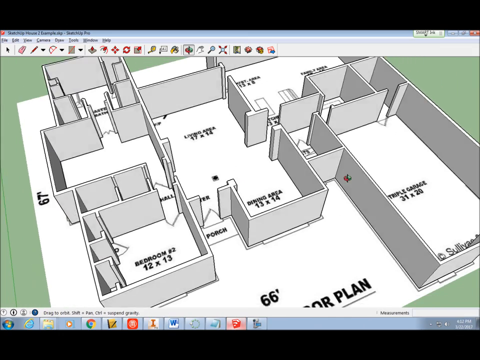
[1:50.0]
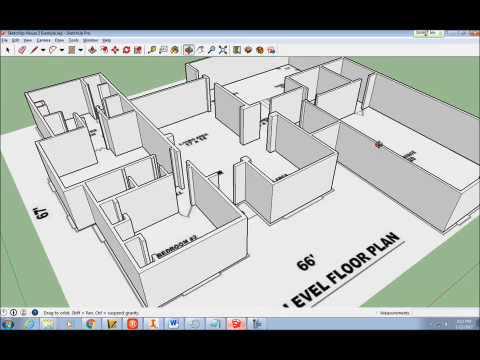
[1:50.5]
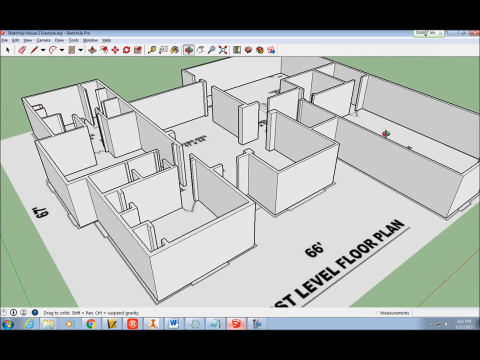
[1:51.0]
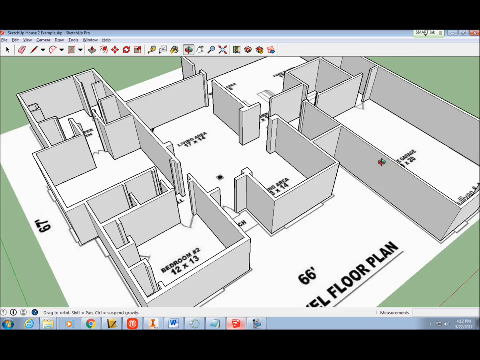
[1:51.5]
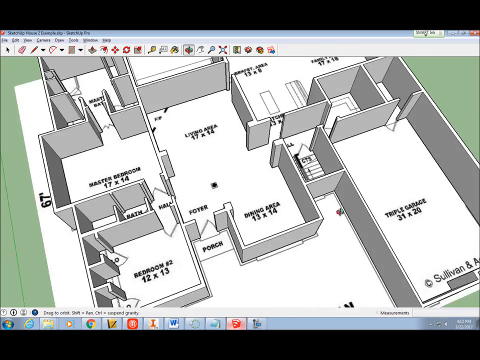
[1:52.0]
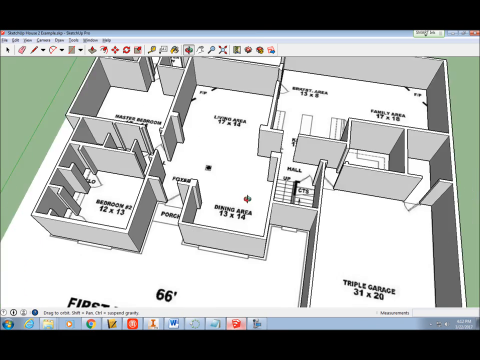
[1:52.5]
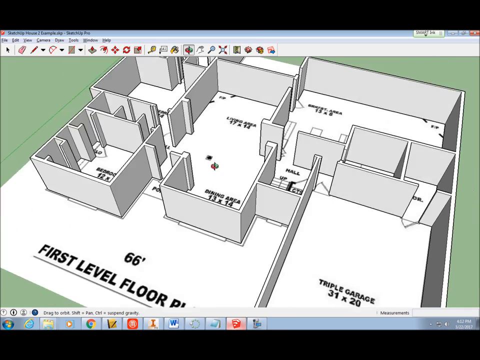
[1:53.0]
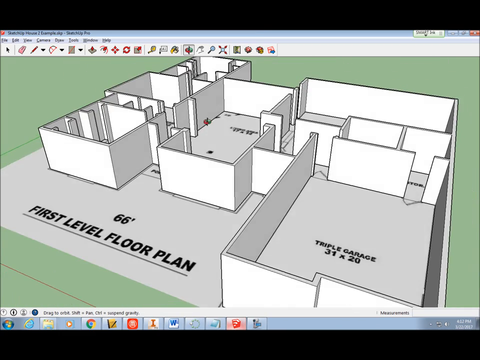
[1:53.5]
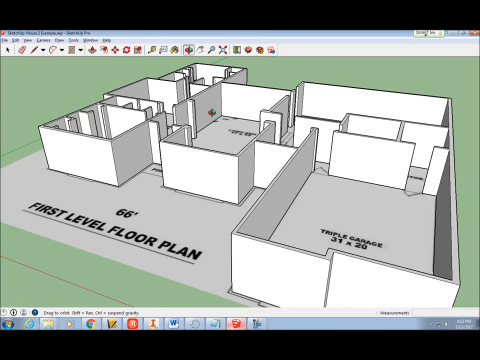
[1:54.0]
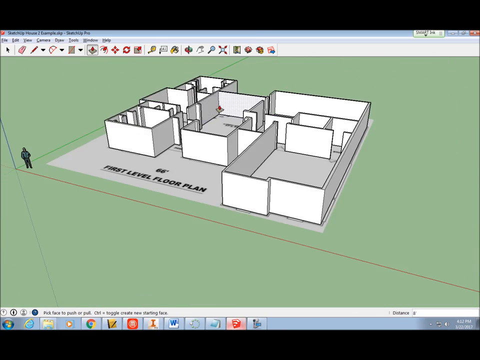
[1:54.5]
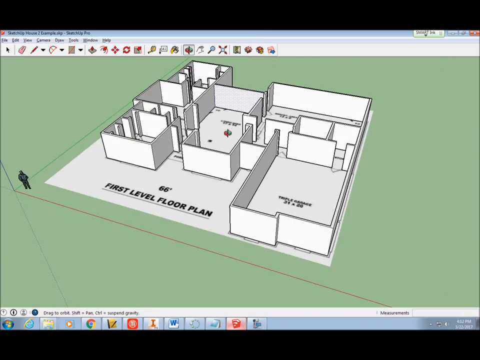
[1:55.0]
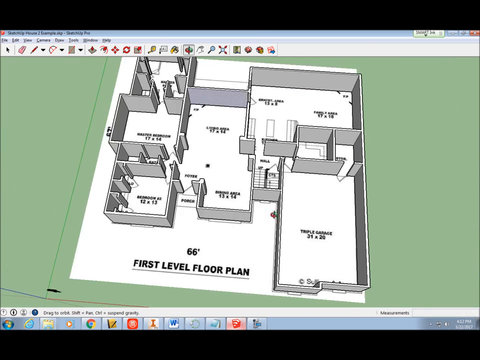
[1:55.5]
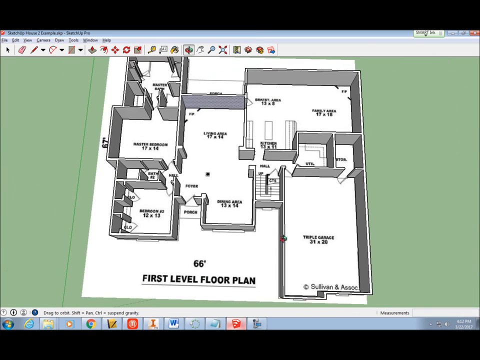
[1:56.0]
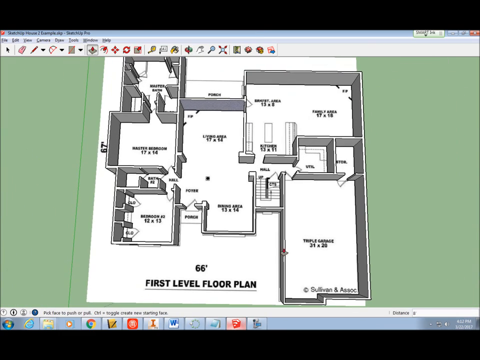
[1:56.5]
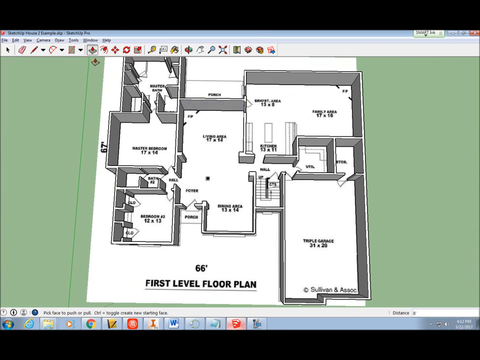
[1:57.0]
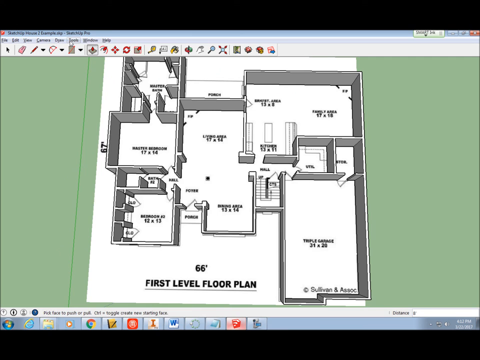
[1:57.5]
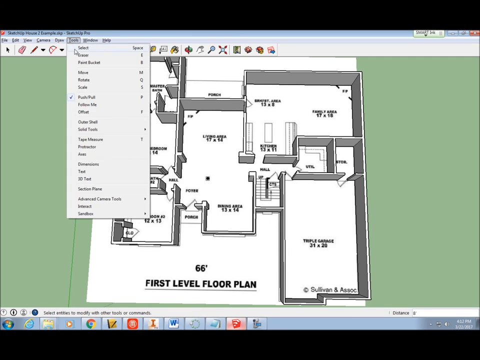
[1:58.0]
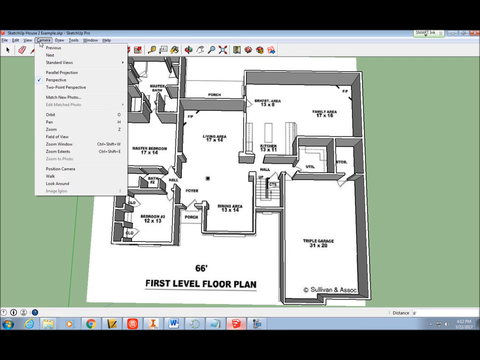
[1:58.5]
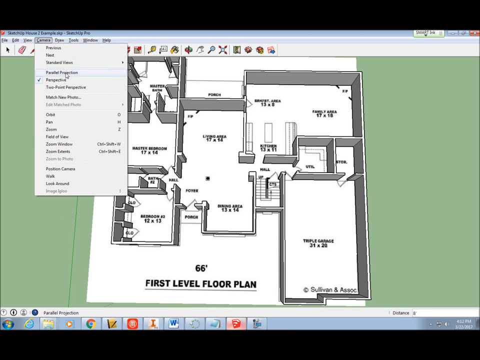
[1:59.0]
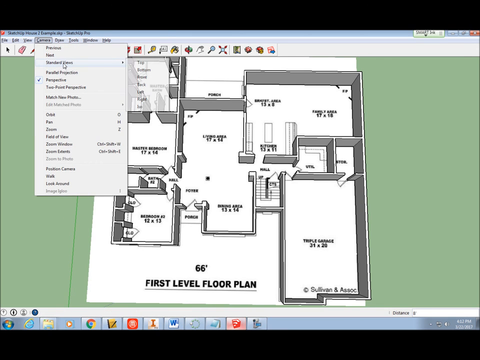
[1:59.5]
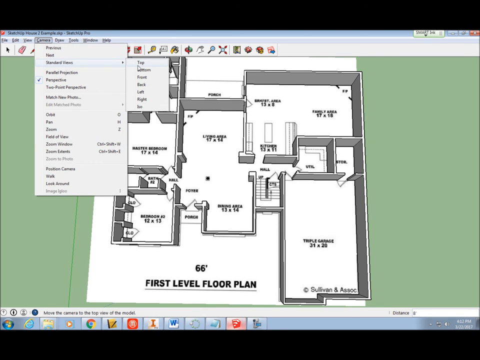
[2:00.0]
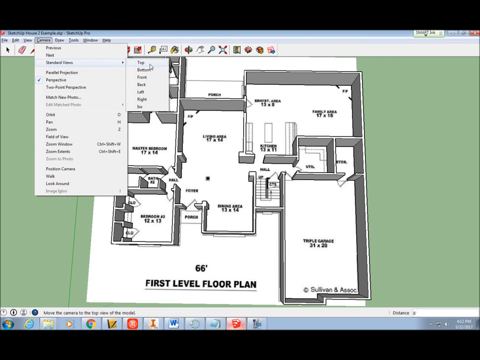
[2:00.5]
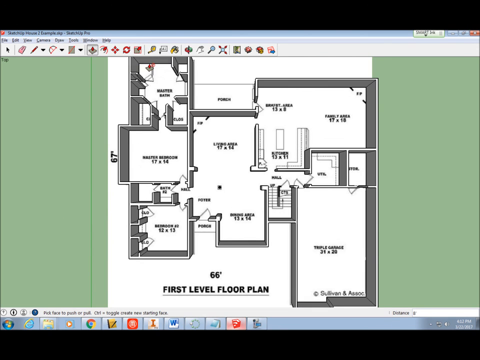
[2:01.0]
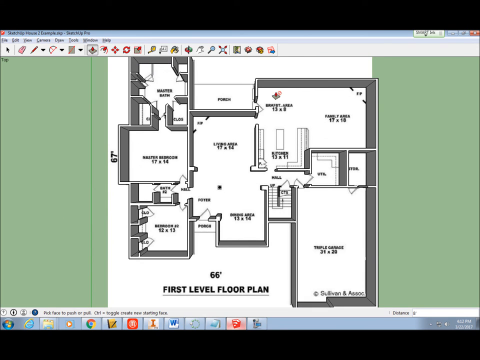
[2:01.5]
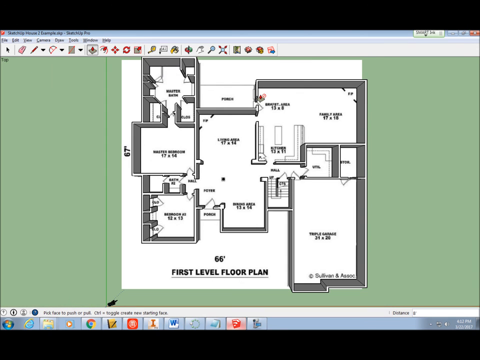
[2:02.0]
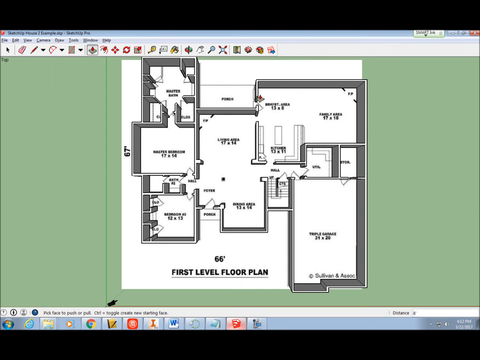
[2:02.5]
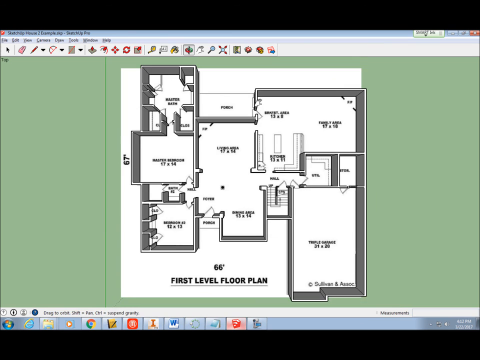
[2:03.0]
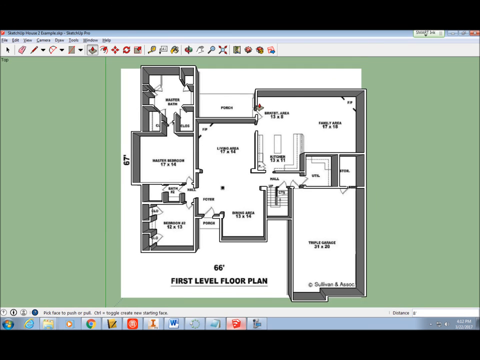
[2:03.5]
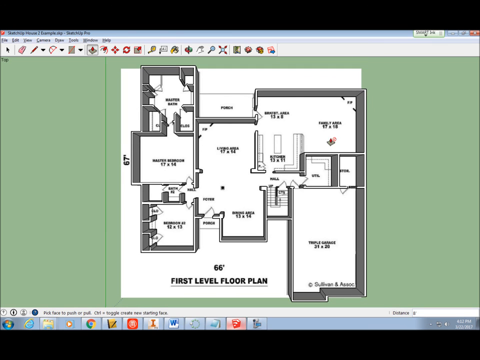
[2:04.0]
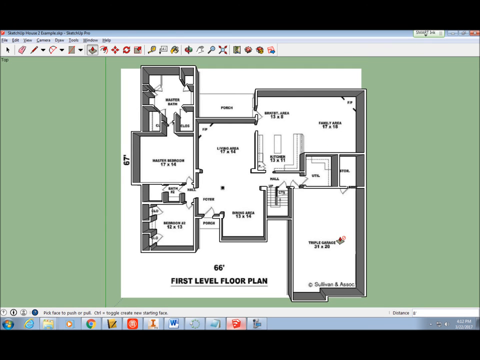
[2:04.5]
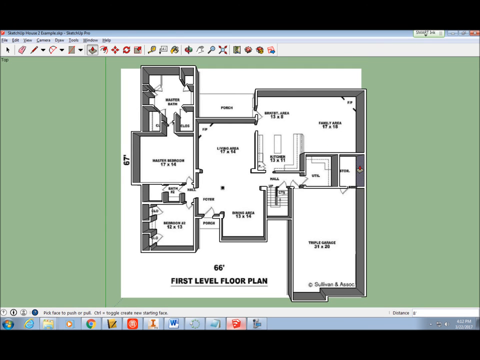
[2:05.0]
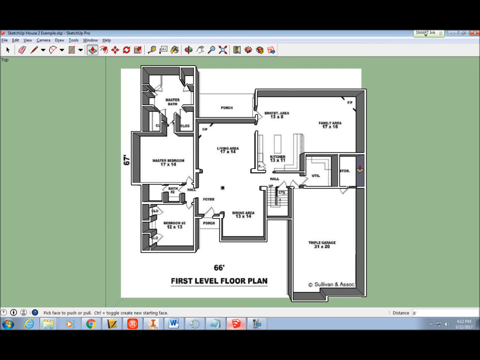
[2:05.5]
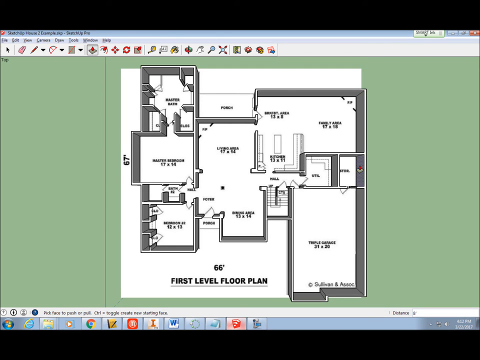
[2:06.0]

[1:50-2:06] A bird's-eye view shows the first floor plan of a house. The view turns around it, starting from the left side of the floor plan at a bird's-eye view and a slight angle rather than straight on, then twisting to the other side, to the left side of the house. For a moment the view is at eye level, then it returns to a bird's-eye view, farther away than at the start, and becomes straight on. The cursor is at the top, where tools for editing the floor plan can be clicked. They click on tools, then on tilt, and the interior walls change to a darker gray color. The view zooms out to directly above, showing the outside borders of the property line and a dark green border on the left side. The cursor moves from left to right, from about the master bedroom to the triple garage.